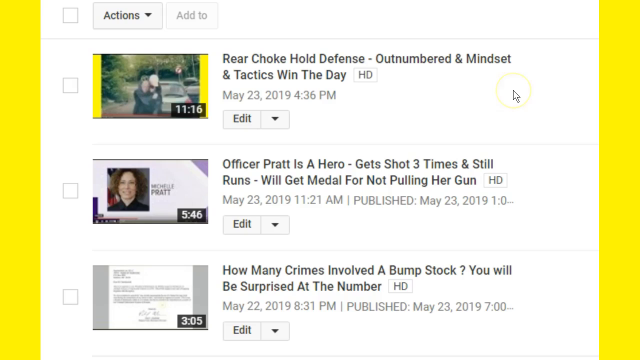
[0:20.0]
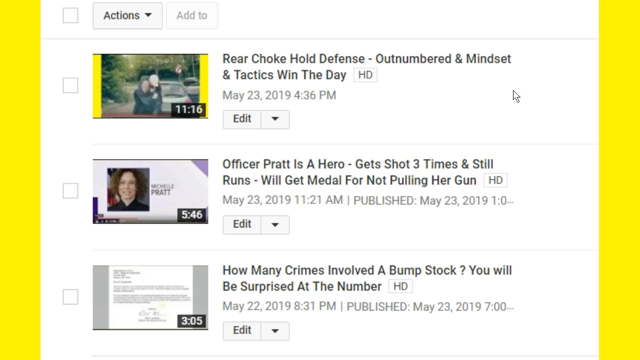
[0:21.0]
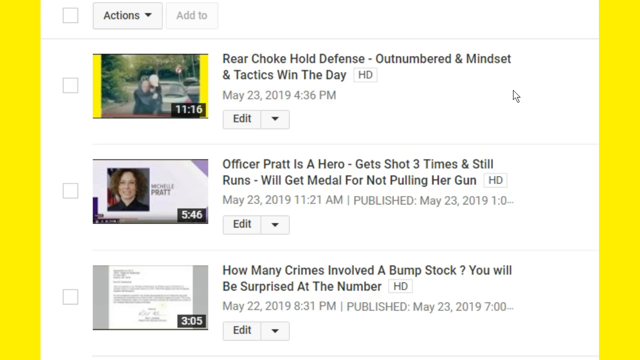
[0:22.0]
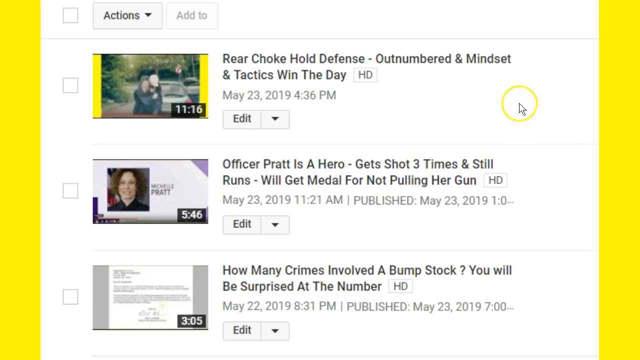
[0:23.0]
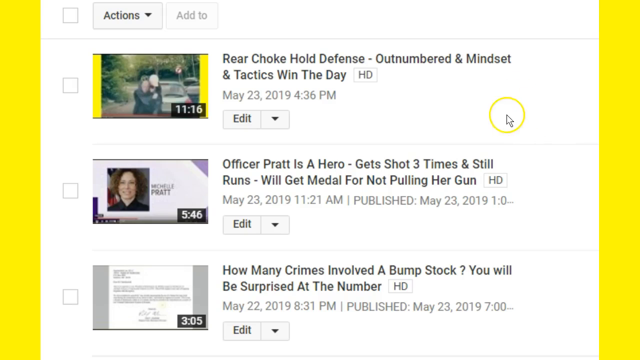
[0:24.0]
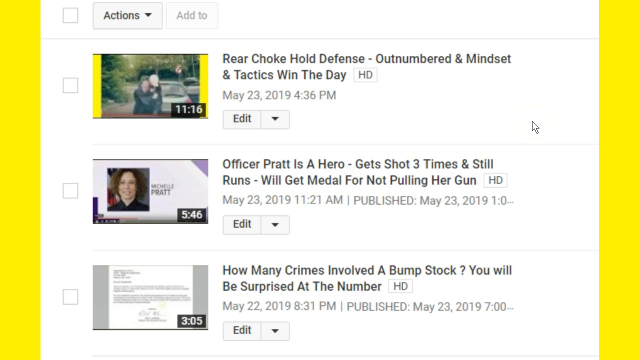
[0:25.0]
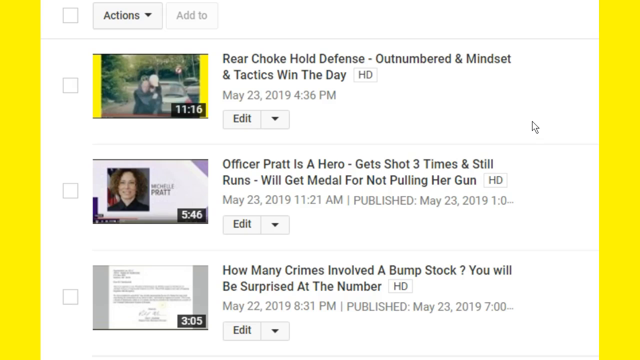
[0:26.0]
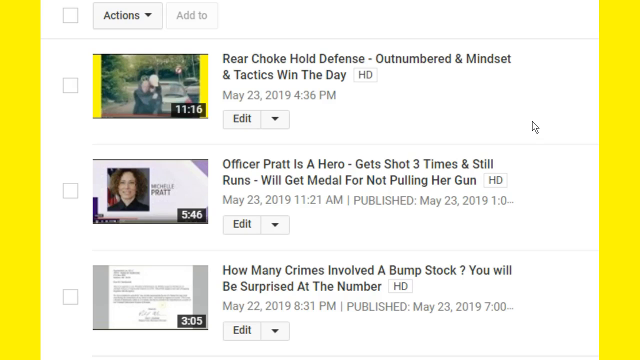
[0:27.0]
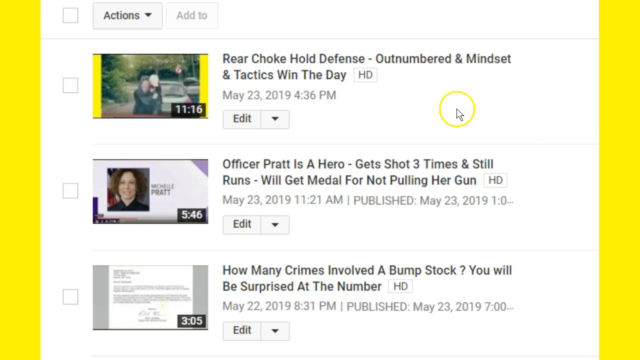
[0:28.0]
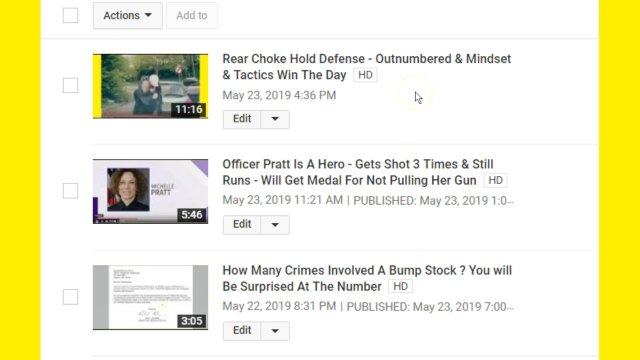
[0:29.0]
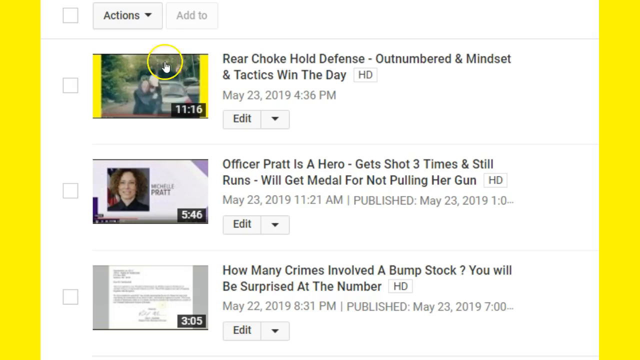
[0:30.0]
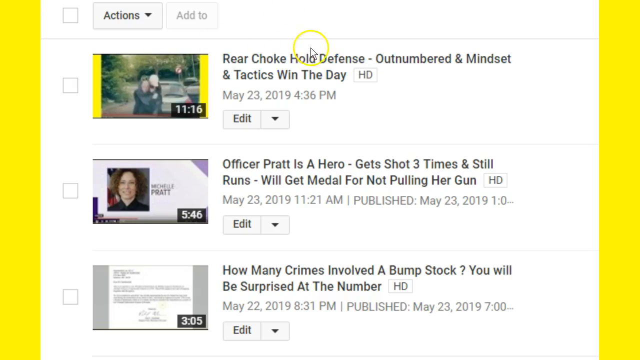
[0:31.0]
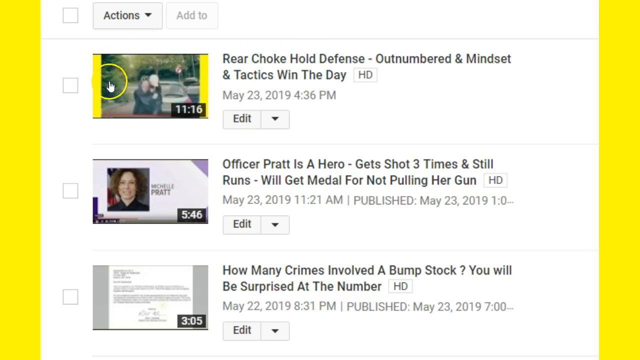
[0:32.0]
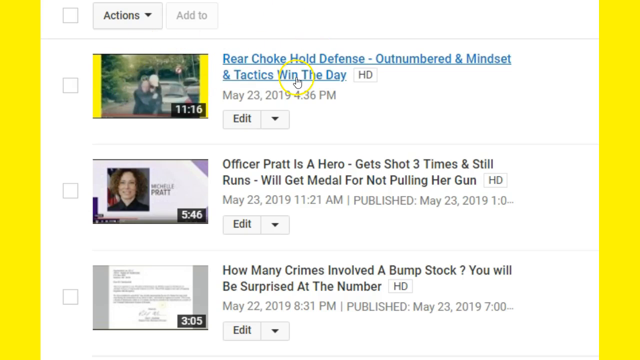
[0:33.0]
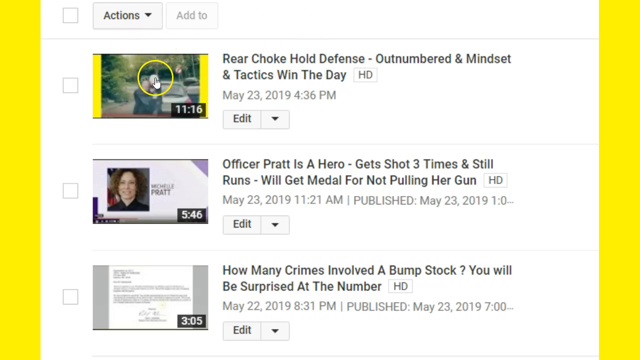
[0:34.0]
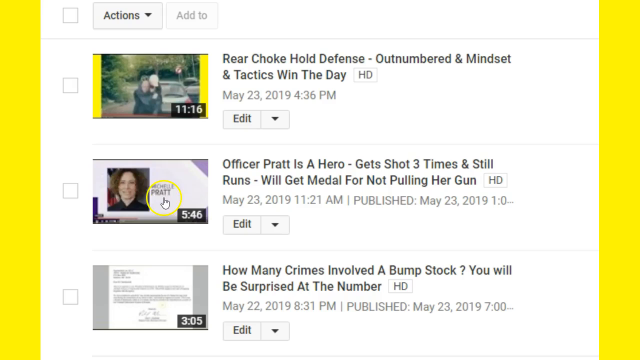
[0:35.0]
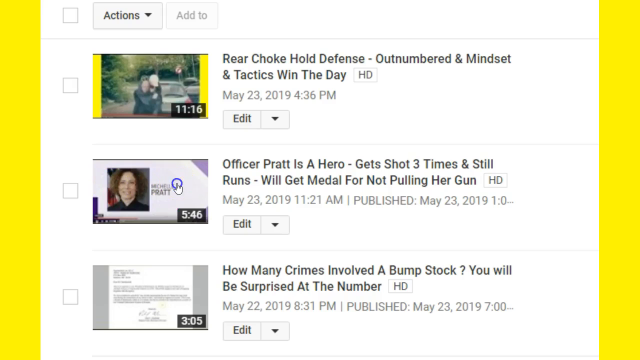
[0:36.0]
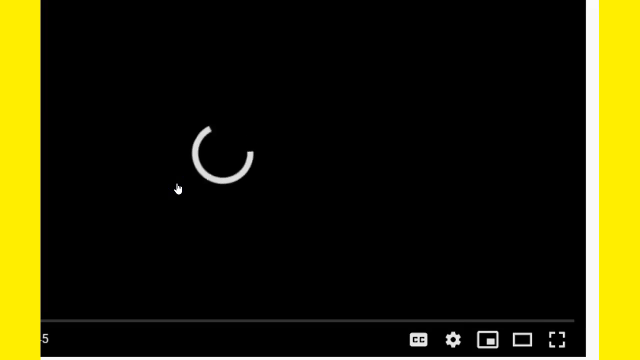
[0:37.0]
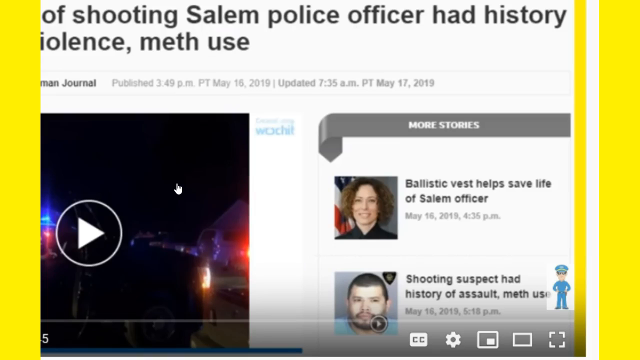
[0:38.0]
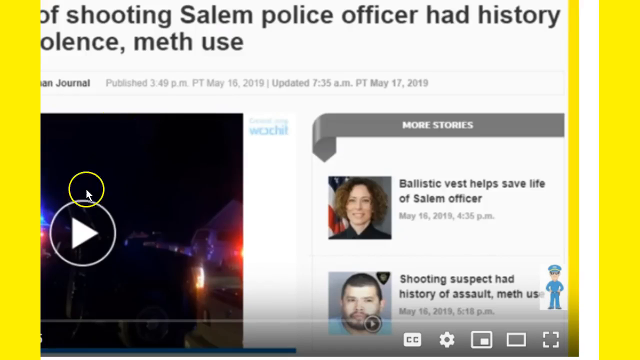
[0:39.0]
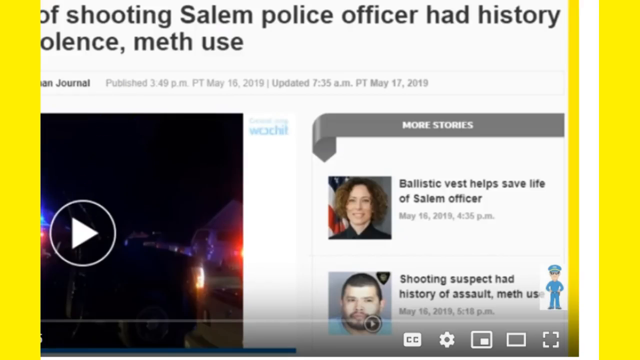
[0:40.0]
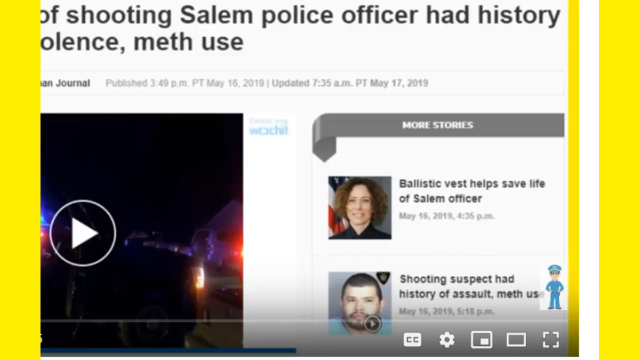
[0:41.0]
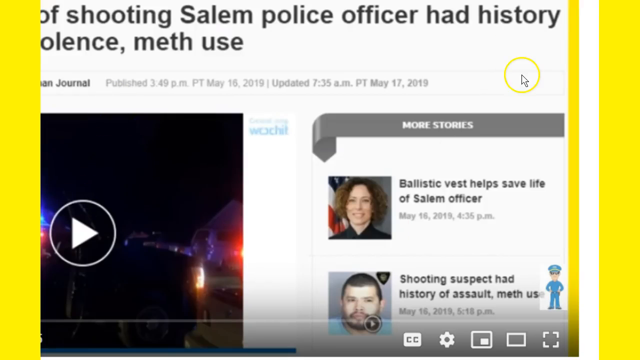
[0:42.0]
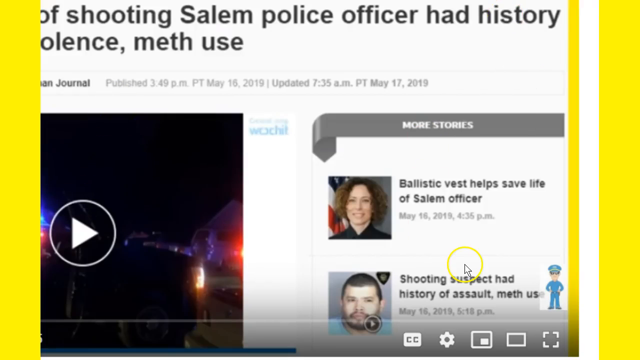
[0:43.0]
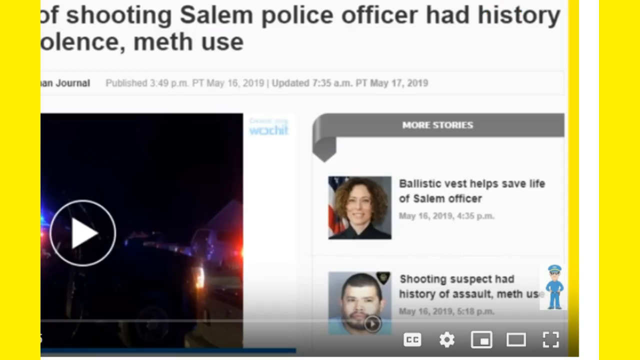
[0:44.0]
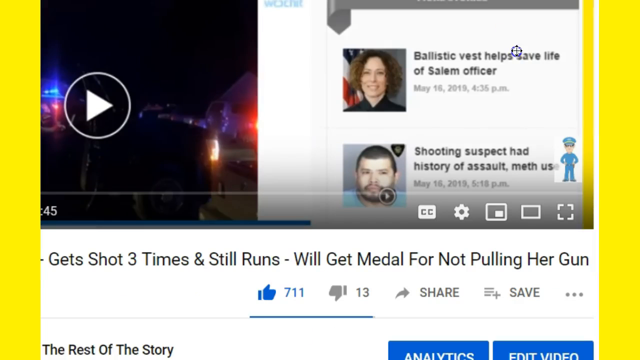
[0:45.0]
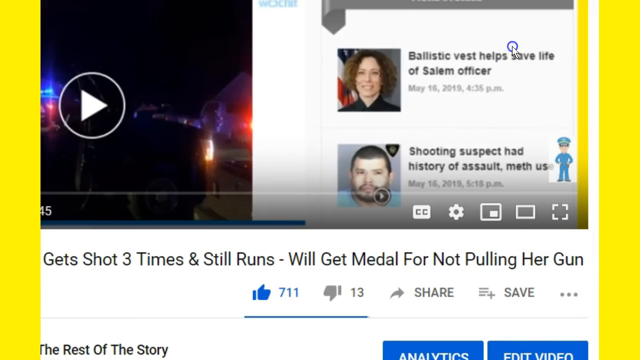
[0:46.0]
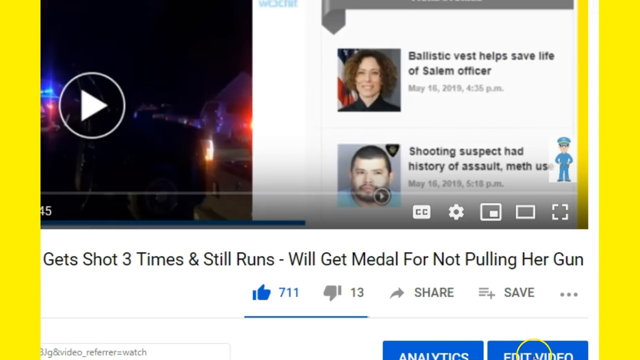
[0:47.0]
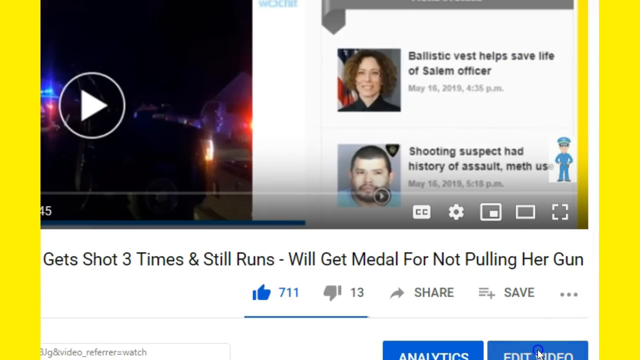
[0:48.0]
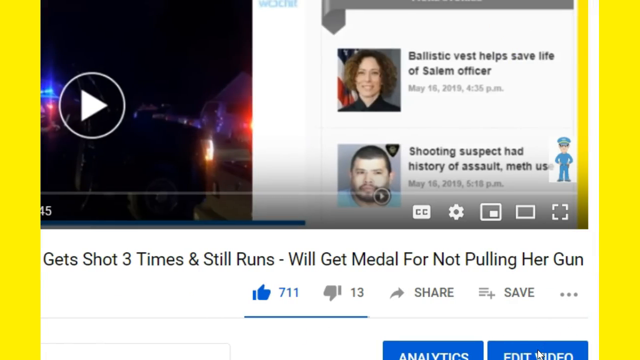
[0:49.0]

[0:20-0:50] Three videos are listed on the site, and the mouse cursor moves around, trying to open them. It eventually opens one of the videos, which shows a woman with curly hair, and then another video showing a white man appears. The videos are short: the first is 11 minutes 16 seconds, the second 5 minutes 43 seconds, and the third only 3 minutes 5 seconds. The first video shows two people hugging, with what seems to be a car behind them. The second shows a woman with curly hair. The third seems to show only some kind of document that cannot be made out. At least the first two videos have people in them.